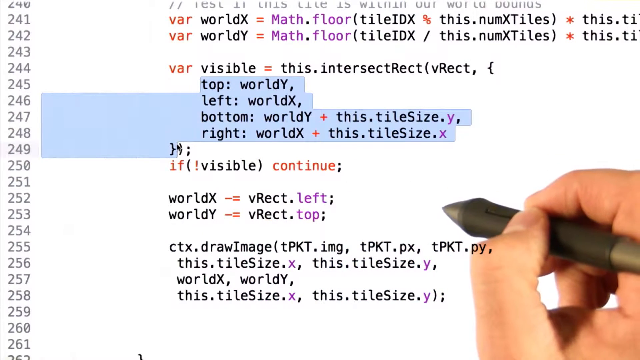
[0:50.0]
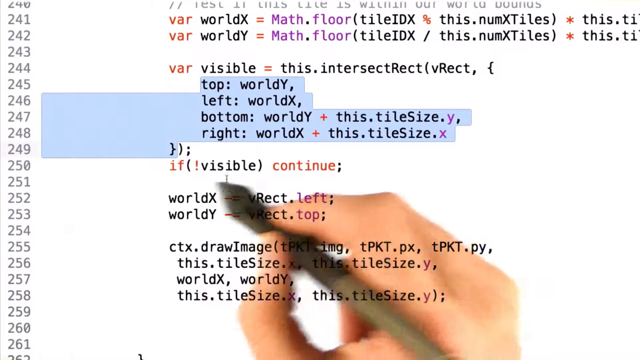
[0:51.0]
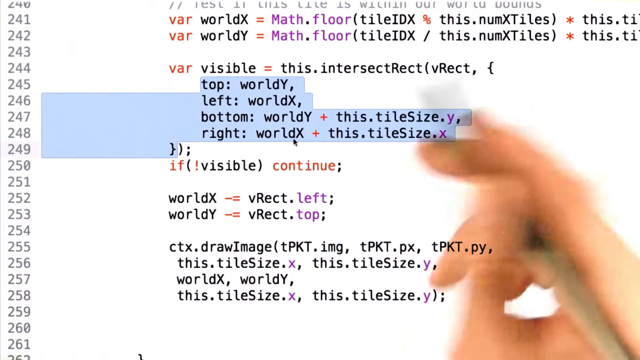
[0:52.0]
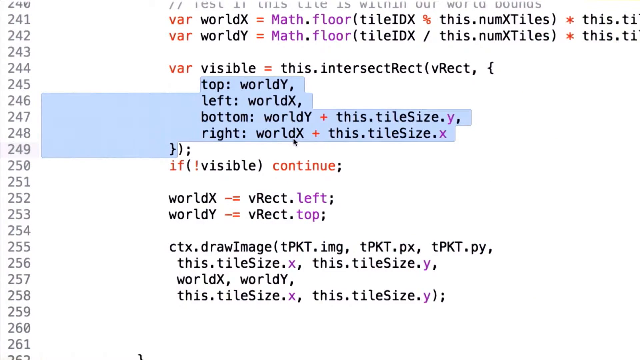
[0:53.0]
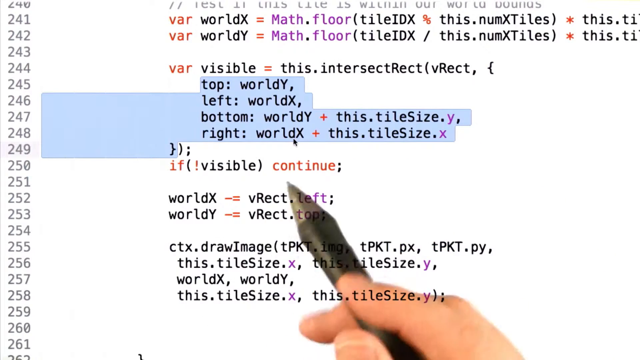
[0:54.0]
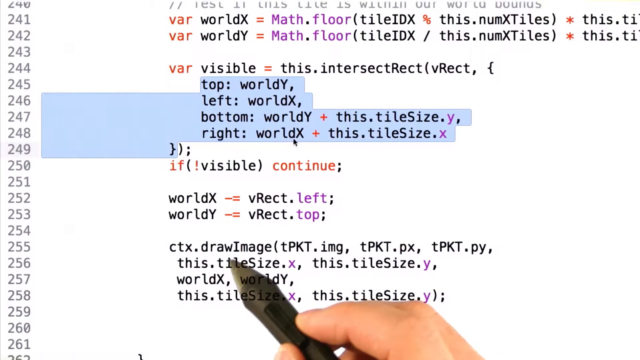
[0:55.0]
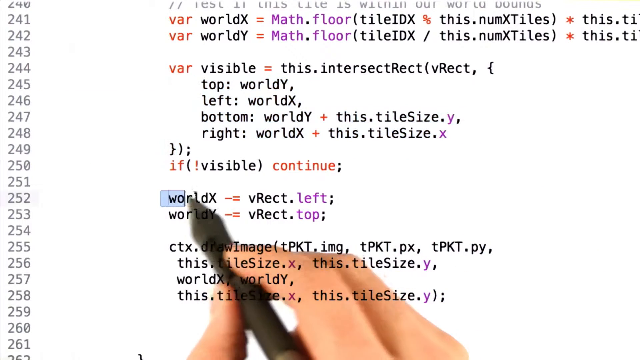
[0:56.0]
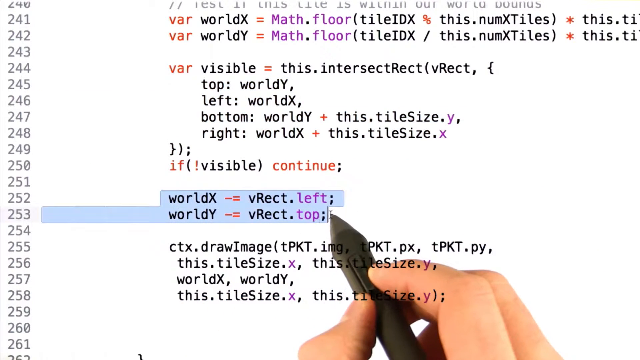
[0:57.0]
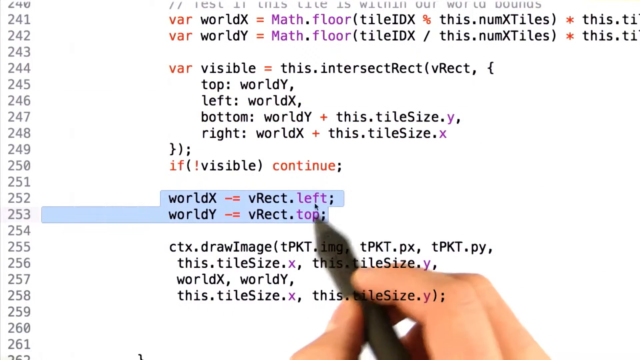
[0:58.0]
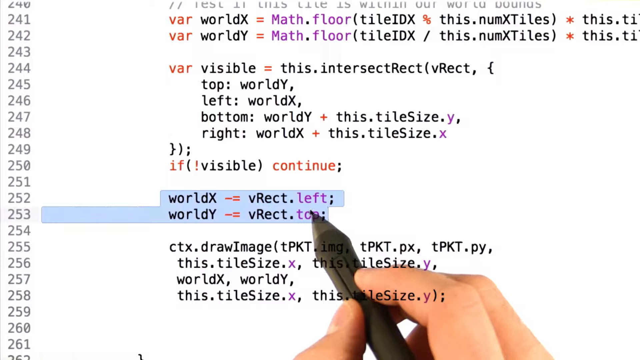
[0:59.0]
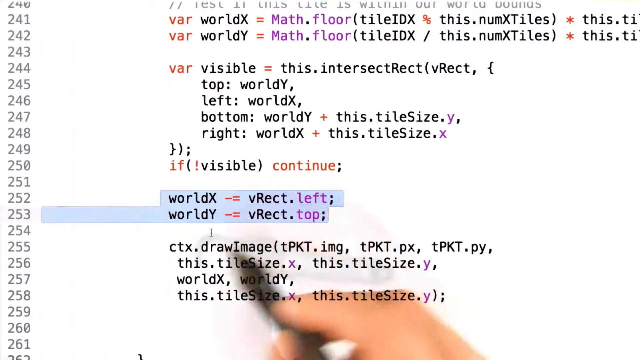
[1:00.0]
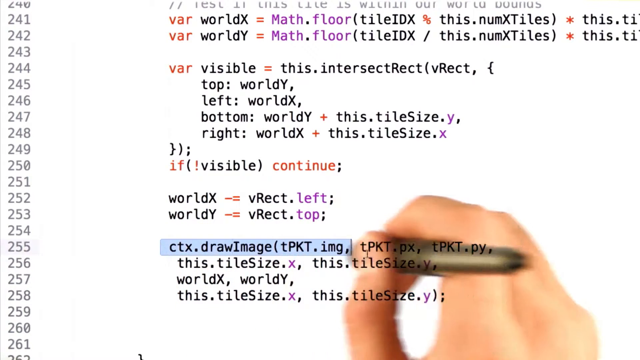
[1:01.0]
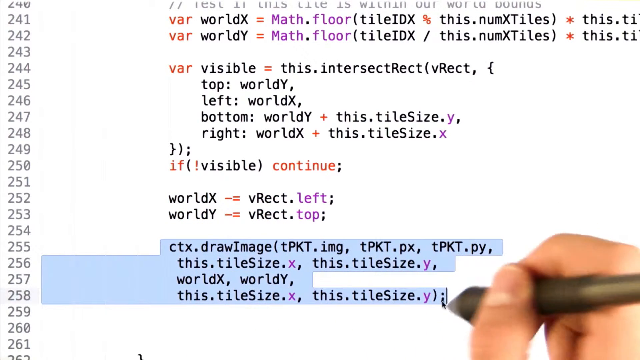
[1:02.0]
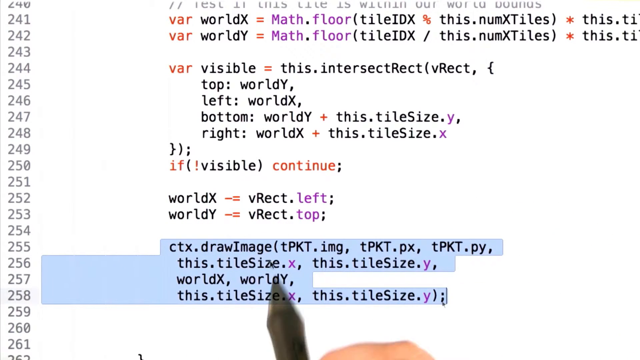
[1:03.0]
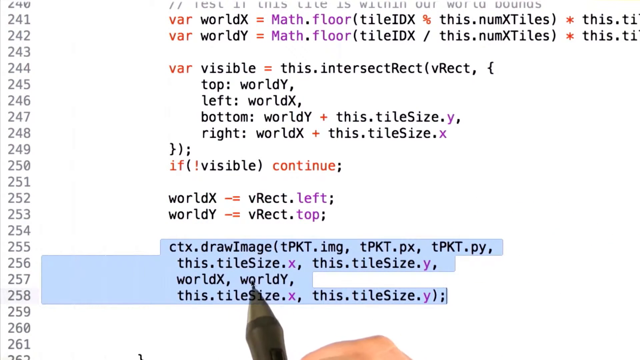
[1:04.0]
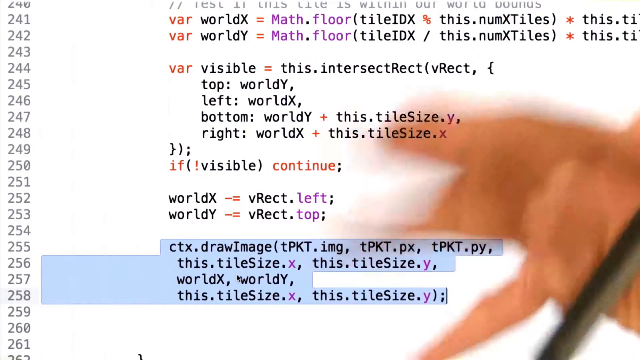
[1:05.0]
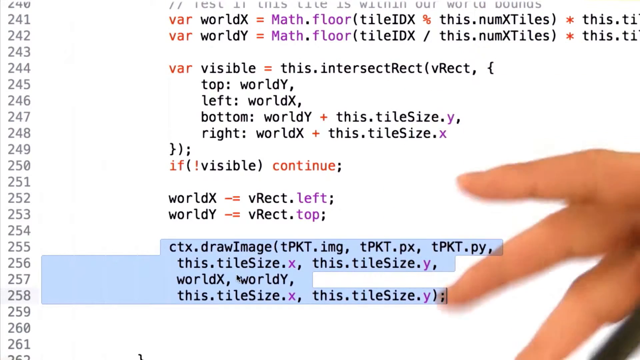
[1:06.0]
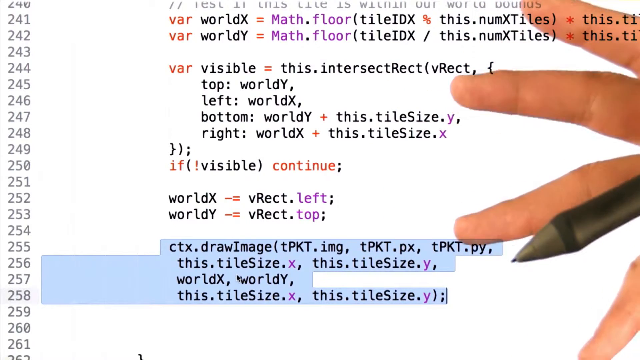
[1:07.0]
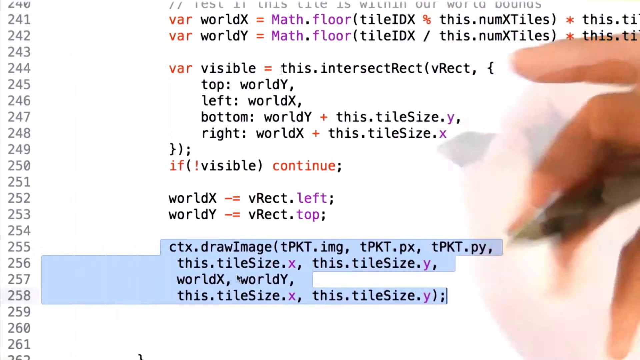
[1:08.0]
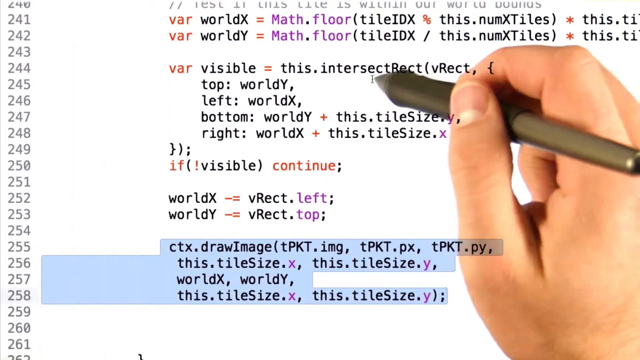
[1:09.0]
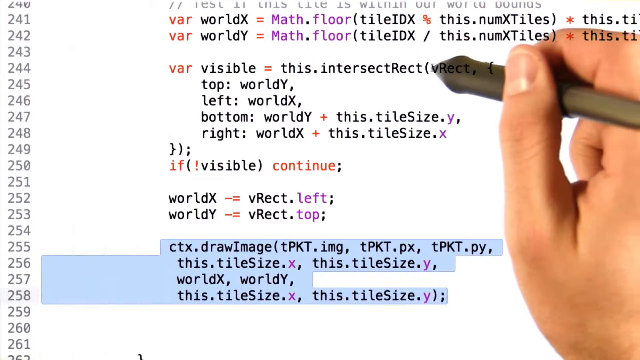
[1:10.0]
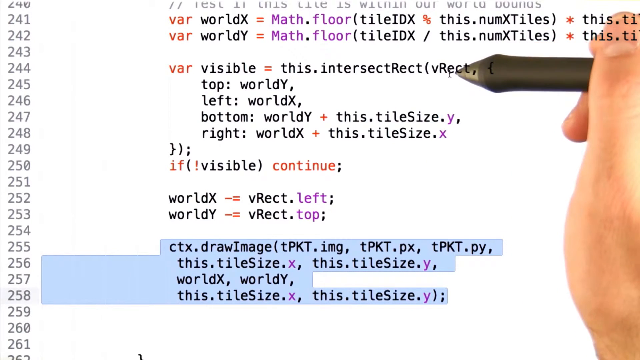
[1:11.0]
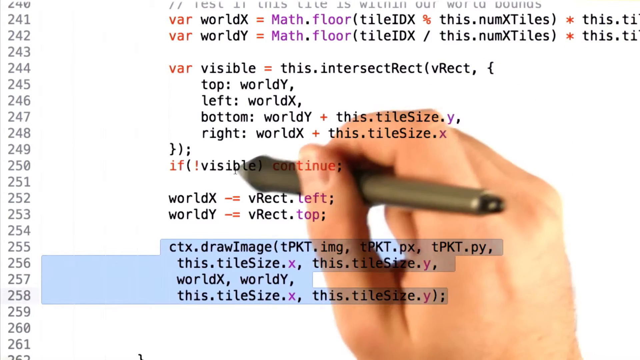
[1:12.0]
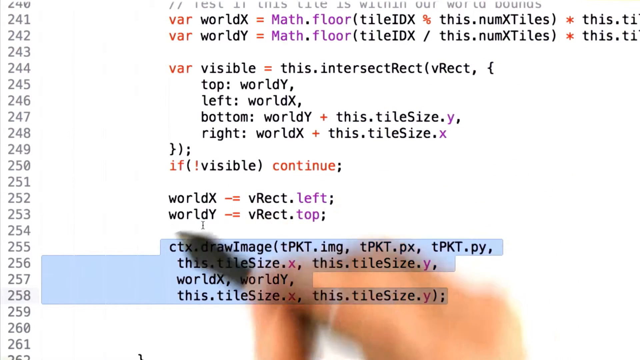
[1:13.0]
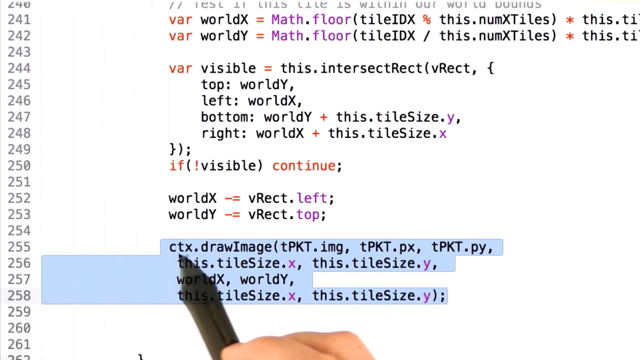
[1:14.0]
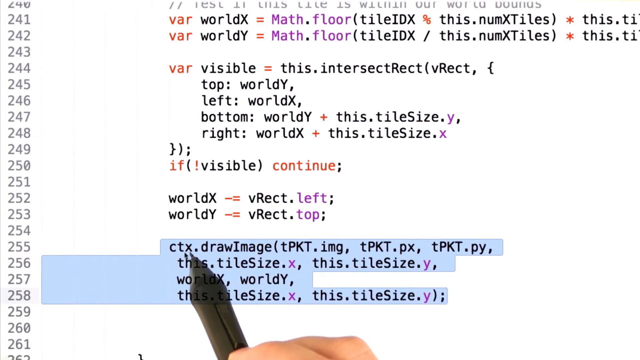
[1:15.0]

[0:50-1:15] The same pen highlights different text, this time "top left", "draw image" and "world". The hand spreads out in an expressive gesture, apparently meant to draw attention to the "draw image" text on the screen. Other words on the screen include "Math", "floor", "tile", "visible", "top left", "bottom right", "draw image", "intersect" and "world". The code is at line 245, then moves down to line 252, where the text reads "left, top, draw image, tile, this tile, this tile, size". The fingers of the same hand direct toward something unclear, and he is obviously enthusiastic about whatever he is showing. He highlights something on the screen, then stops and spreads out his fingers in a quick, deliberate manner.